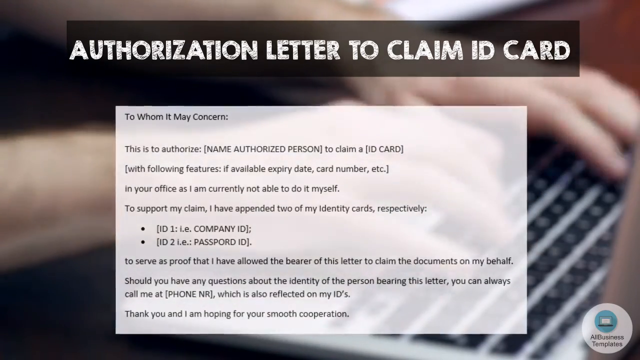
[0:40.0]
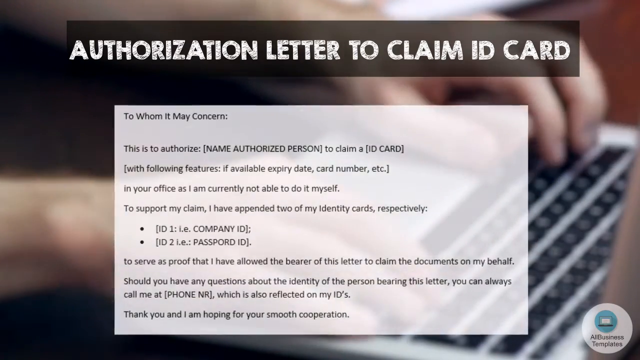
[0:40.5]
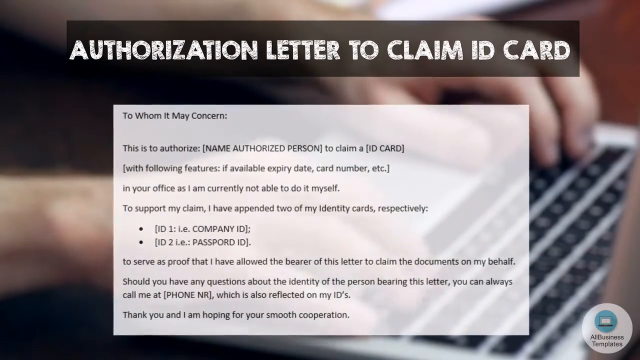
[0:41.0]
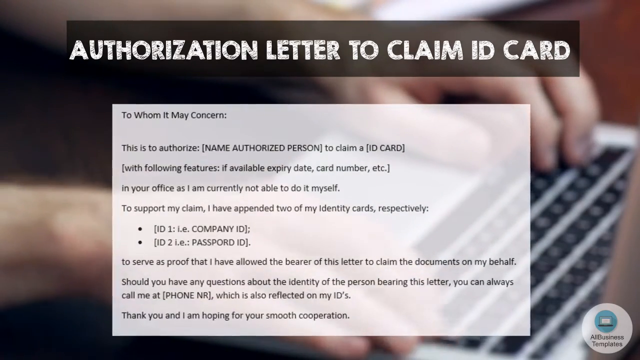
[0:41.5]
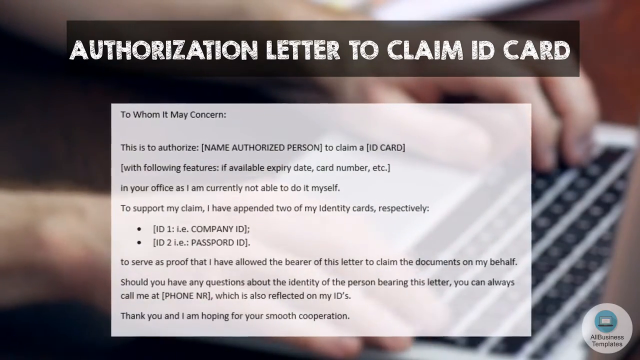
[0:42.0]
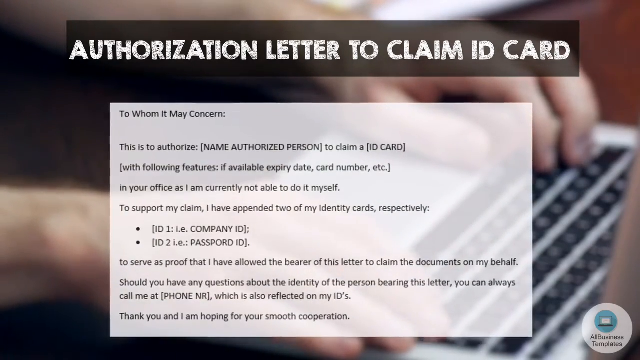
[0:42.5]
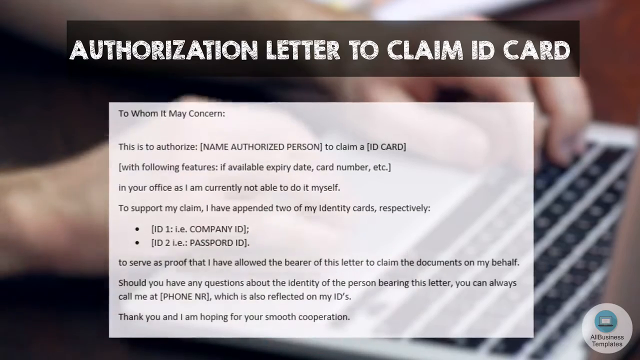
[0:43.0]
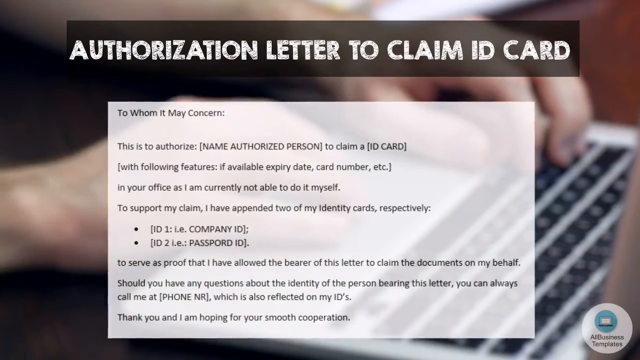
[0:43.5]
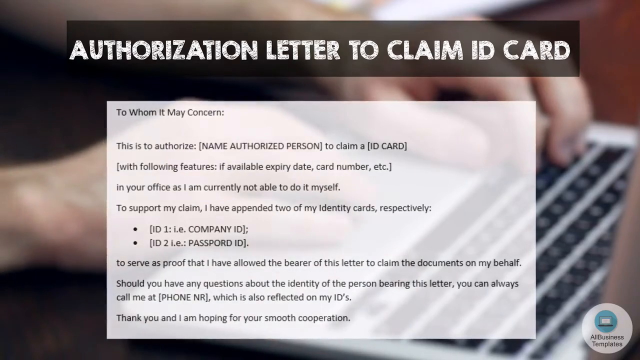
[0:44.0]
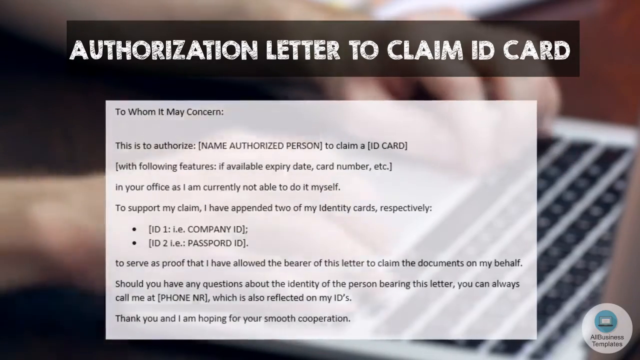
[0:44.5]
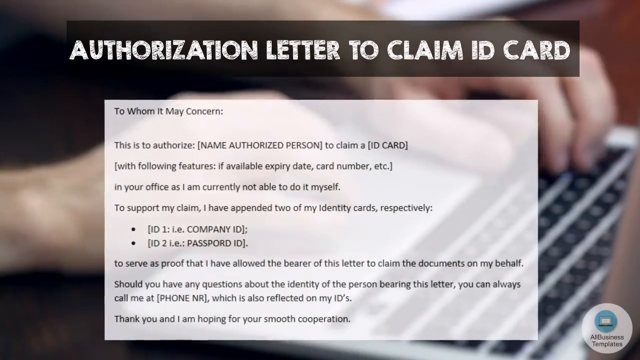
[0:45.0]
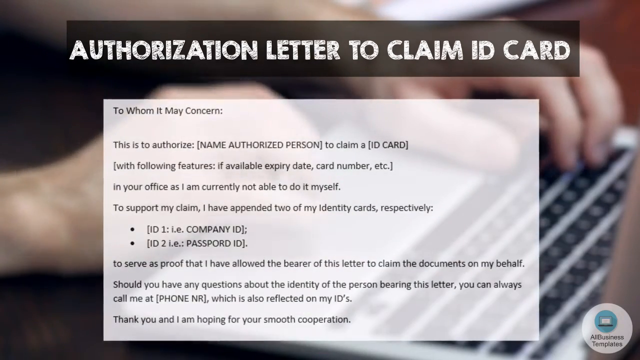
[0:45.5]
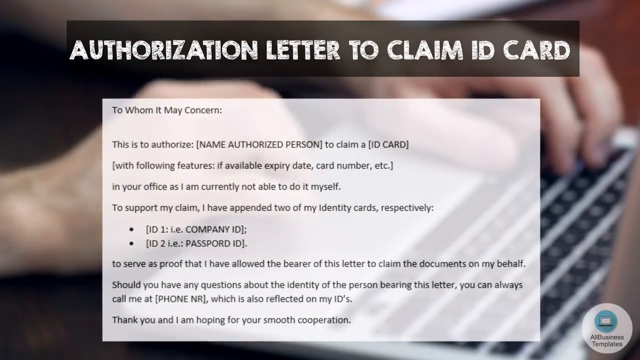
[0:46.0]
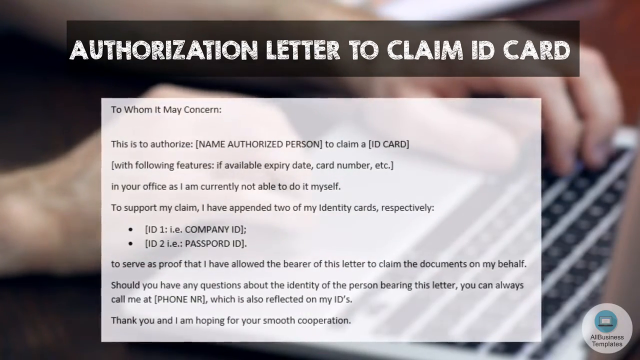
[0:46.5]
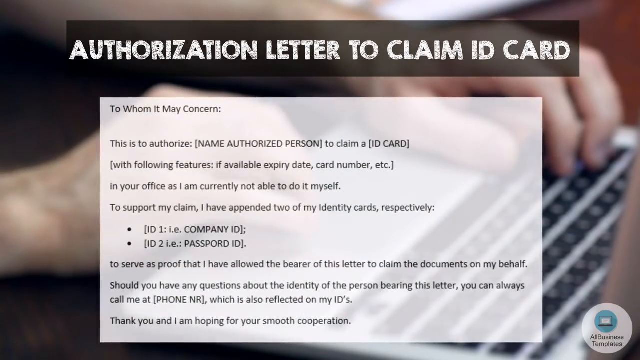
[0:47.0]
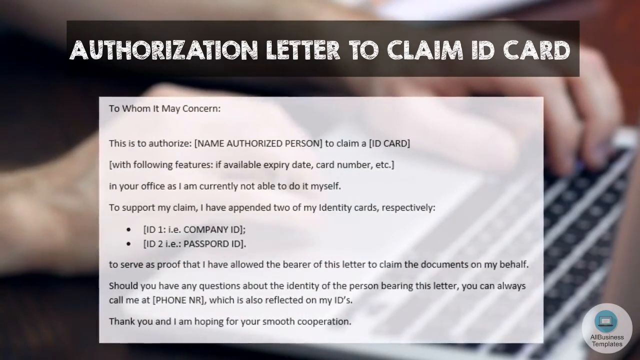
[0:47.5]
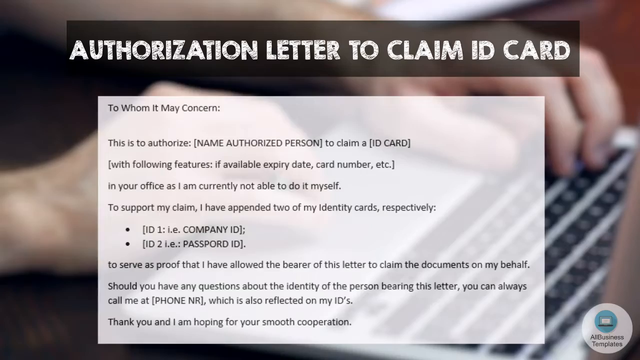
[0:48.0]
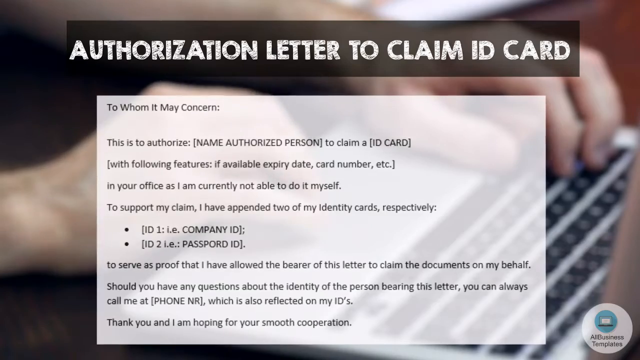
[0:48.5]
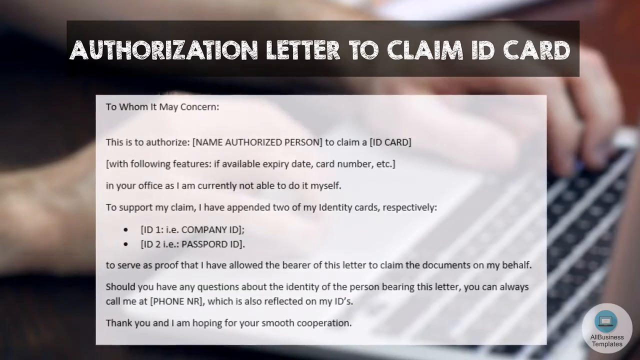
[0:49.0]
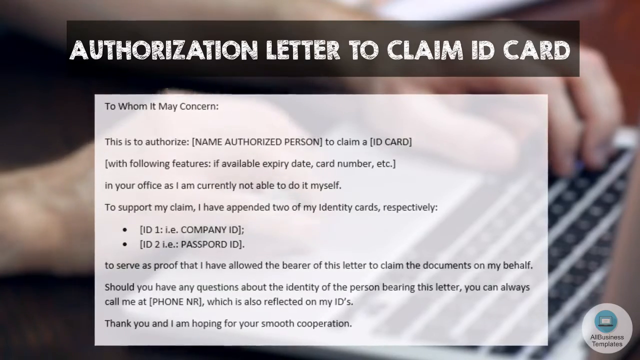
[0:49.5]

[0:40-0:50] Text at the top of the screen reads "authorization letter to claim ID card." Beneath it is a card with a lot of text giving instructions and a format for writing a letter to claim an ID card. In the background, two white Caucasian hands type on a gray laptop and also swipe on the trackpad. The card in the center reads "to whom it may concern, this is to authorize," followed by a blank, then "to claim a ID card with the following features, if available," then "In your office, I am currently not able to do it myself. To support my claim, I have appended two of my identity cards, respectively." It then reads "to serve as proof that I have allowed the bearer of this letter to claim documents on my behalf. Should you have any questions about the identity of the person bearing this letter, you can always call me."